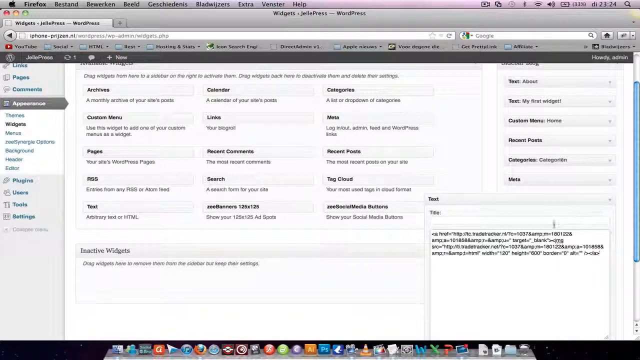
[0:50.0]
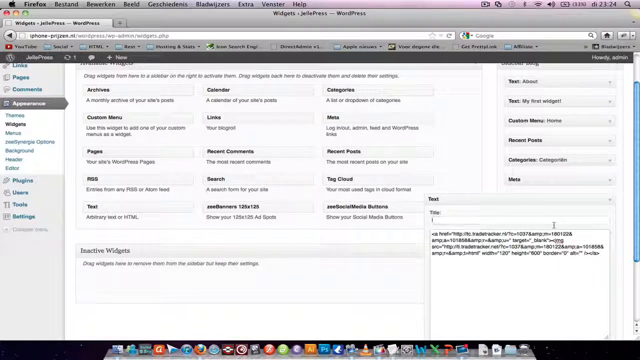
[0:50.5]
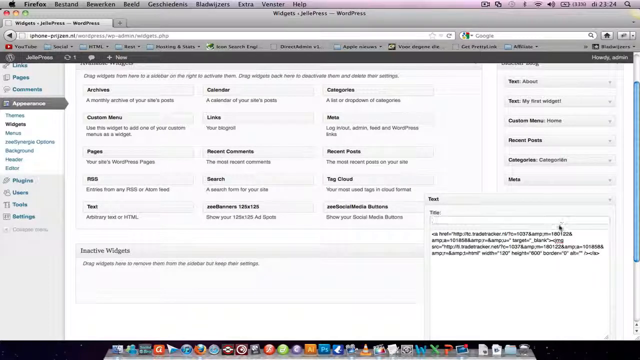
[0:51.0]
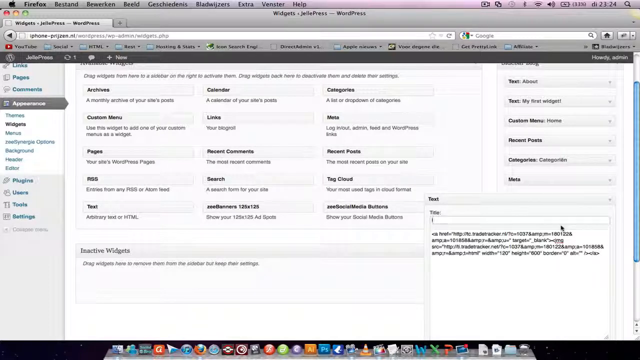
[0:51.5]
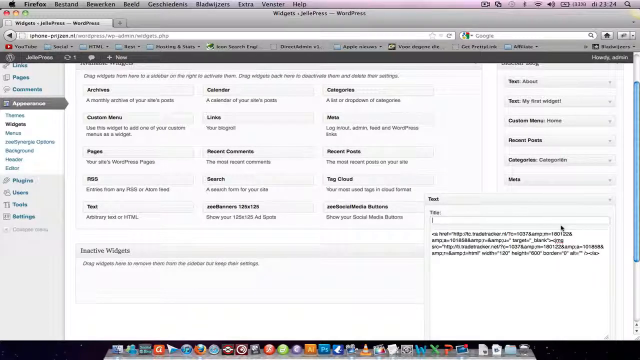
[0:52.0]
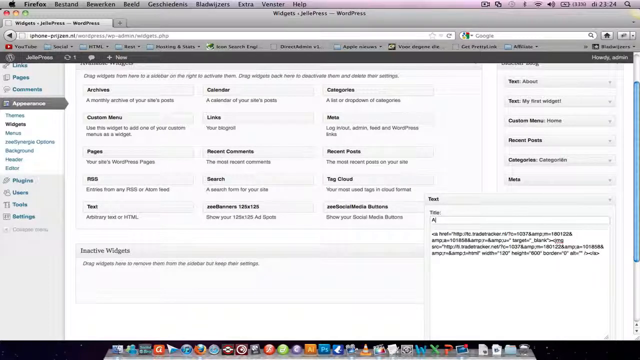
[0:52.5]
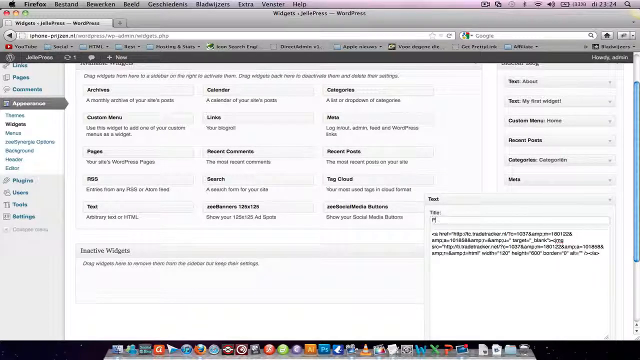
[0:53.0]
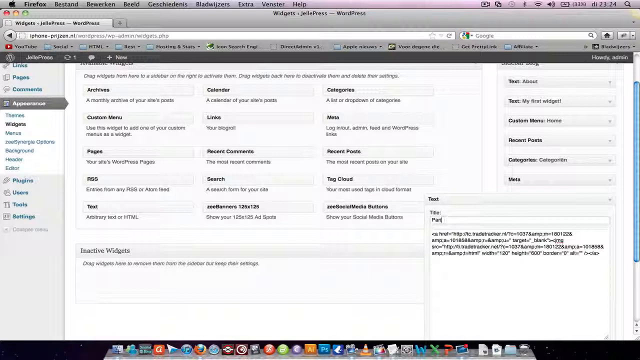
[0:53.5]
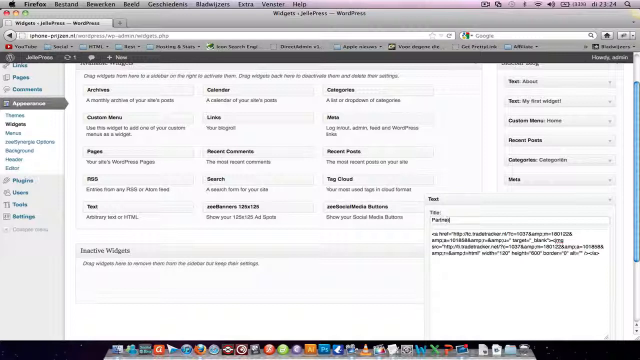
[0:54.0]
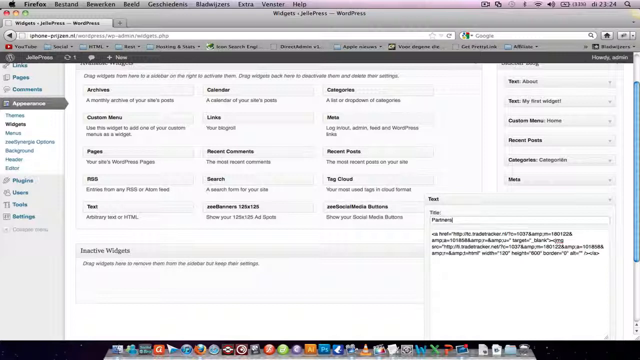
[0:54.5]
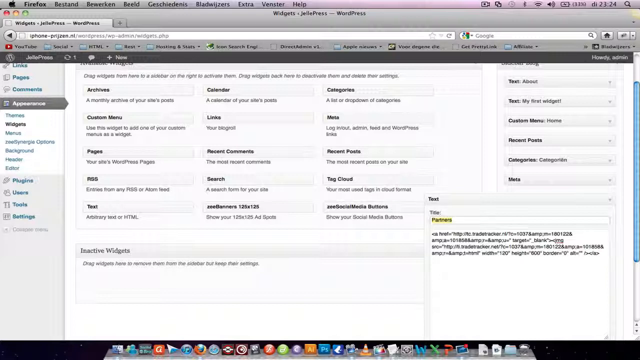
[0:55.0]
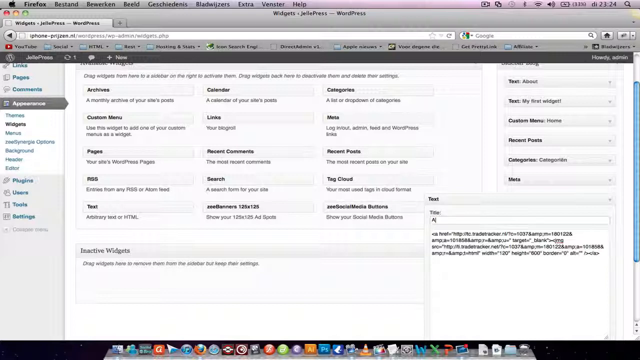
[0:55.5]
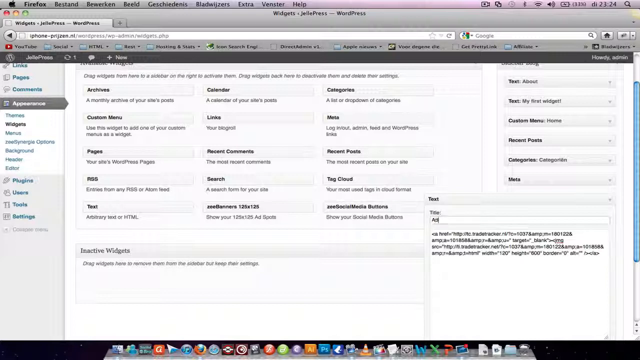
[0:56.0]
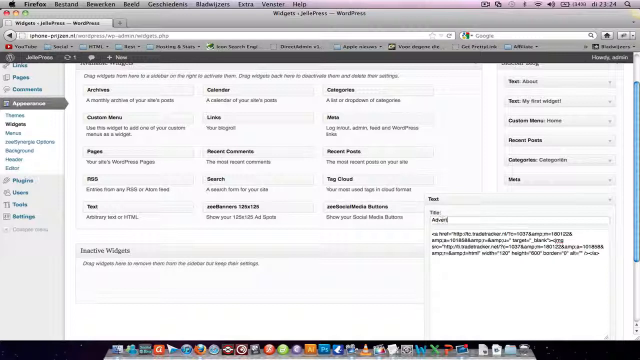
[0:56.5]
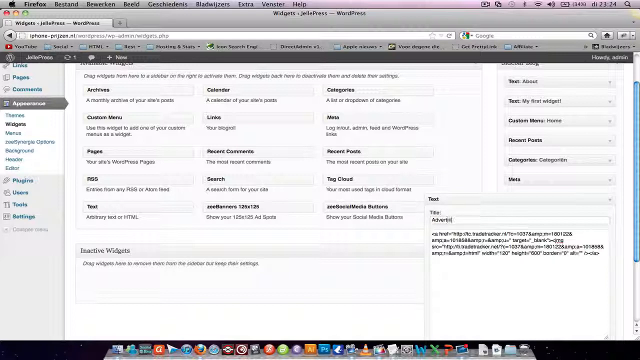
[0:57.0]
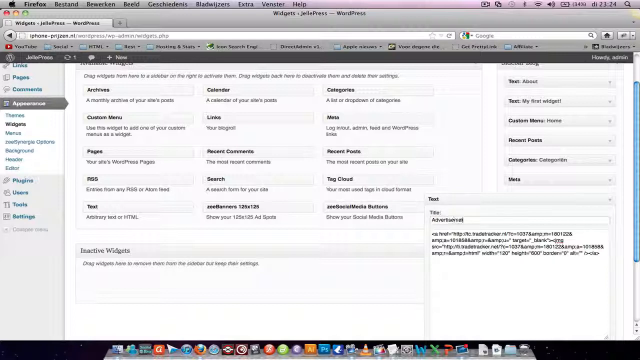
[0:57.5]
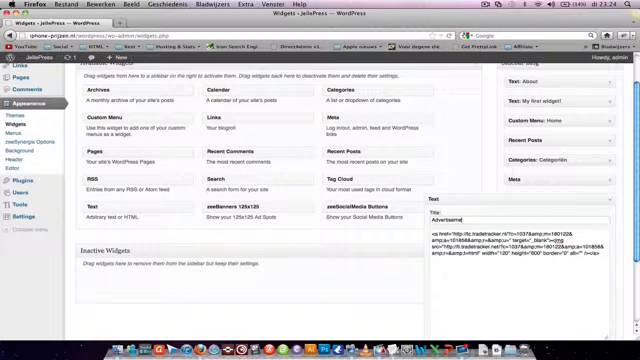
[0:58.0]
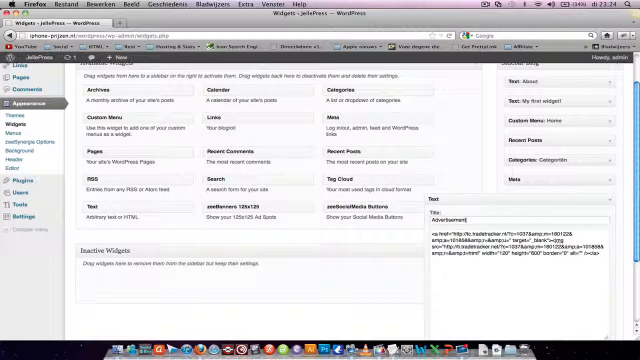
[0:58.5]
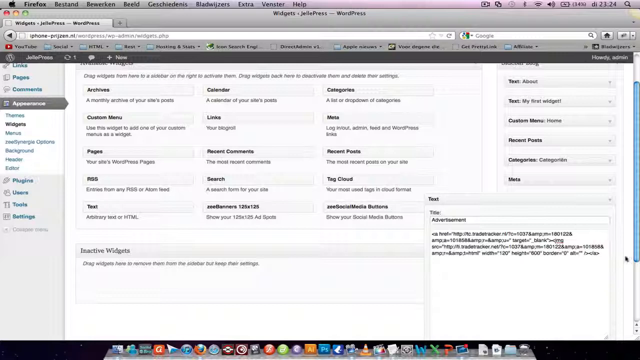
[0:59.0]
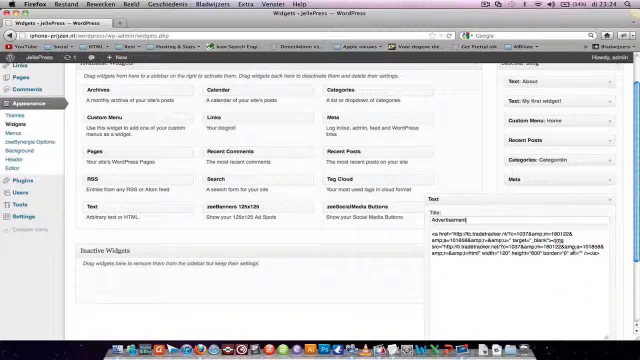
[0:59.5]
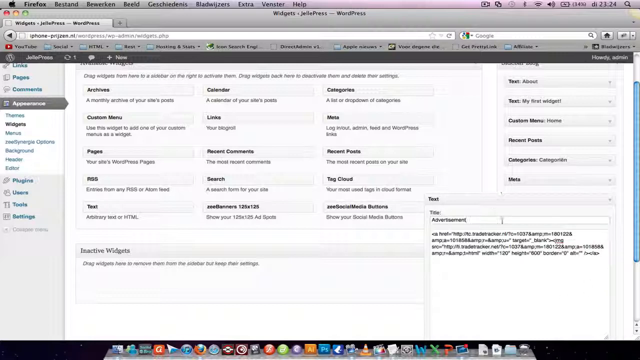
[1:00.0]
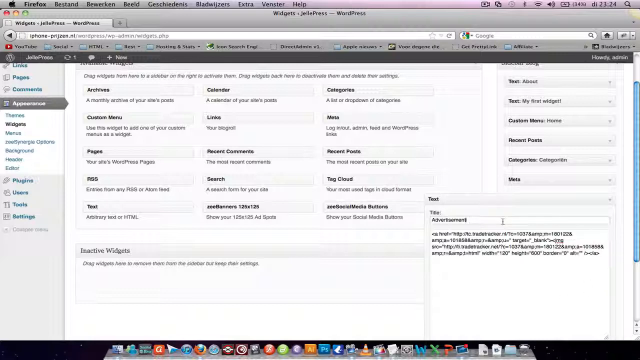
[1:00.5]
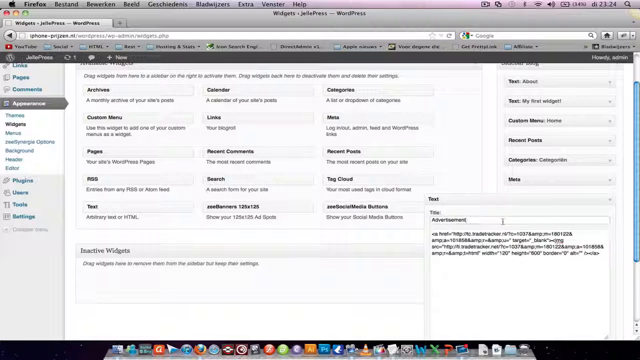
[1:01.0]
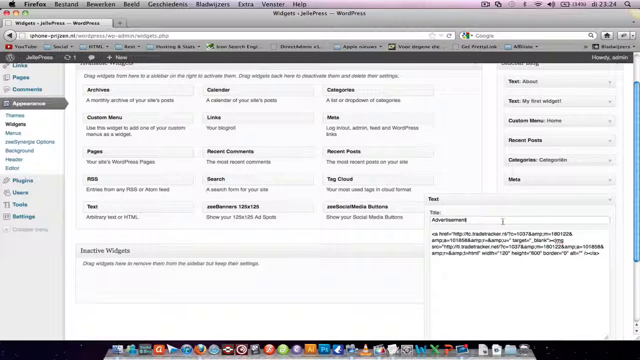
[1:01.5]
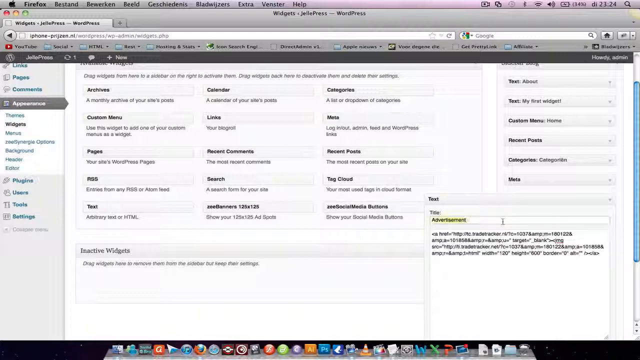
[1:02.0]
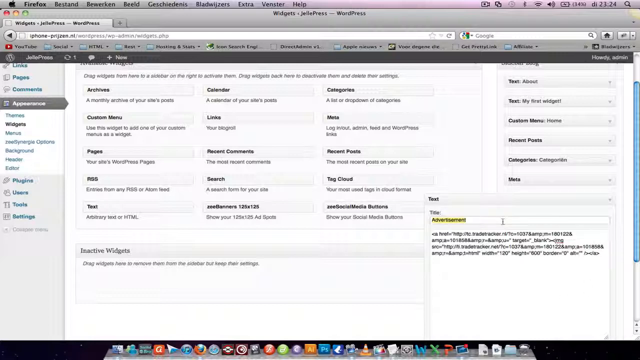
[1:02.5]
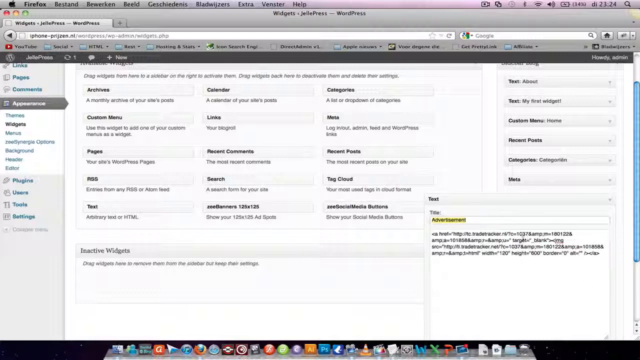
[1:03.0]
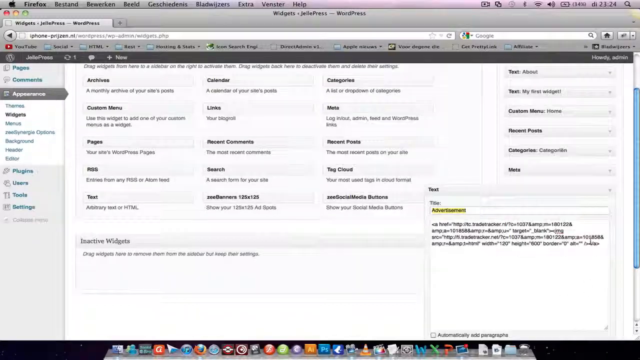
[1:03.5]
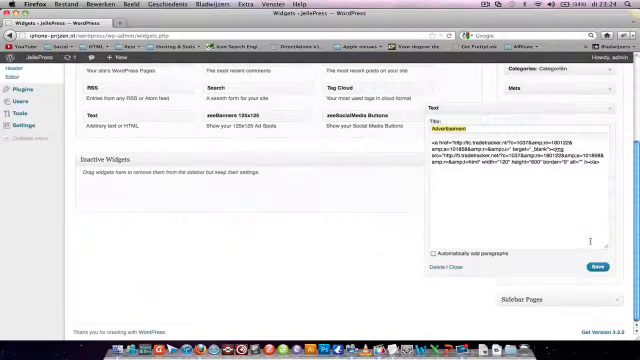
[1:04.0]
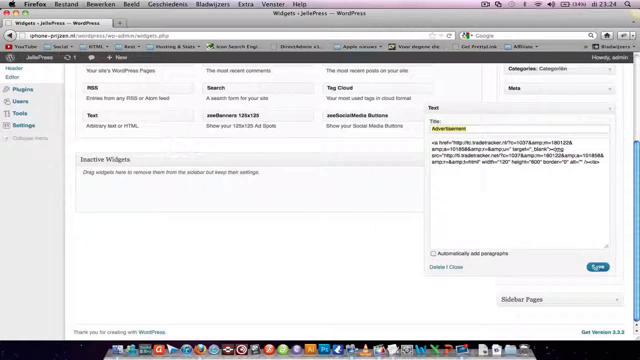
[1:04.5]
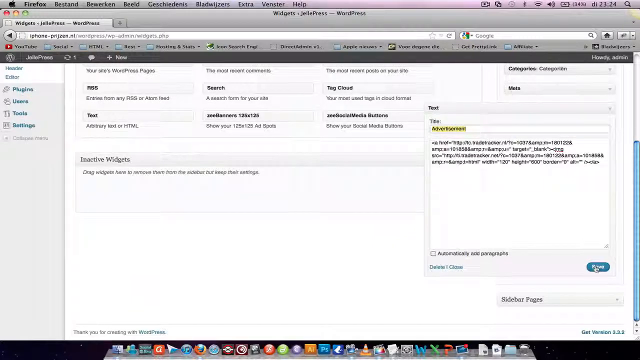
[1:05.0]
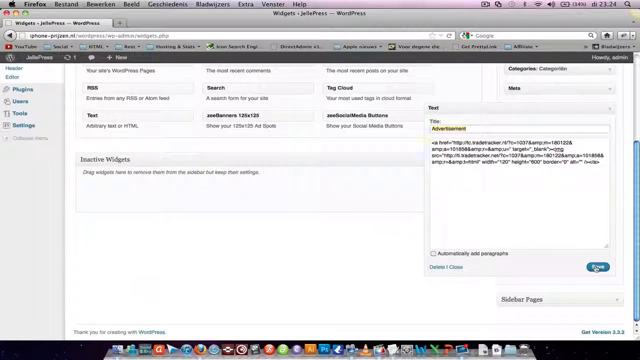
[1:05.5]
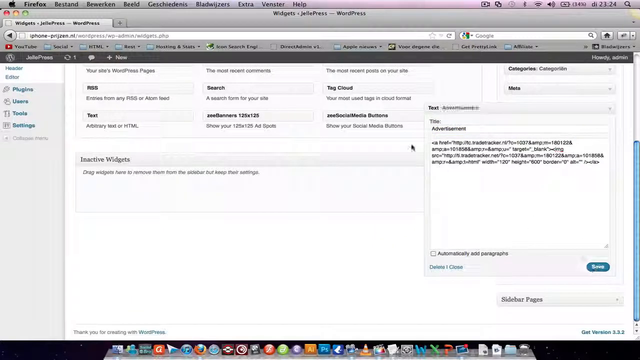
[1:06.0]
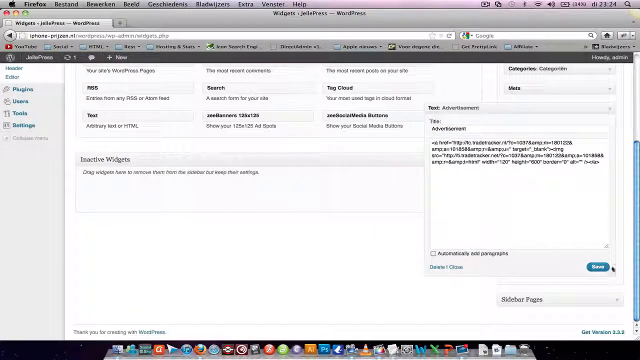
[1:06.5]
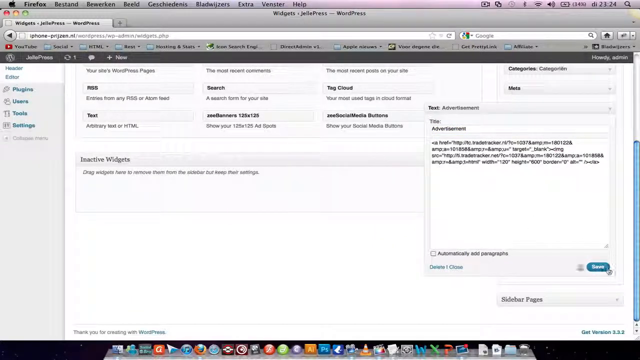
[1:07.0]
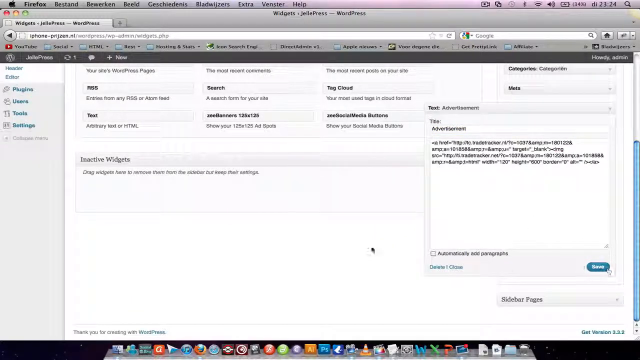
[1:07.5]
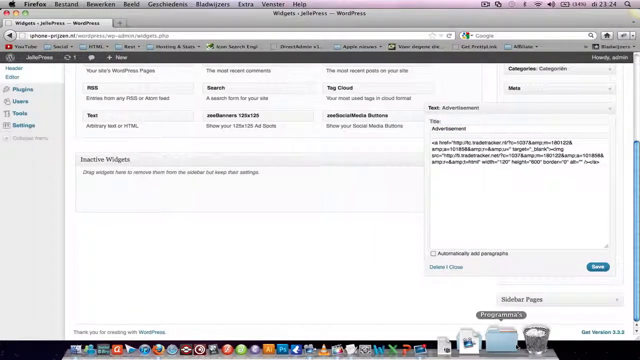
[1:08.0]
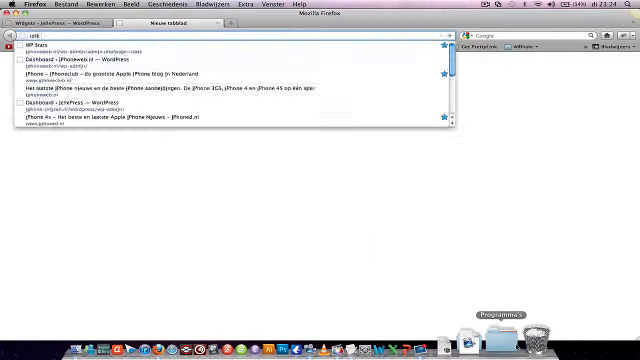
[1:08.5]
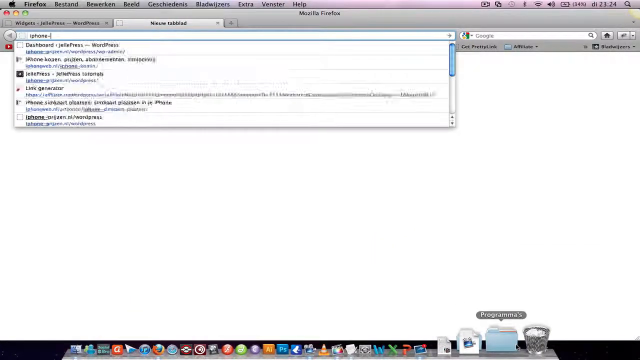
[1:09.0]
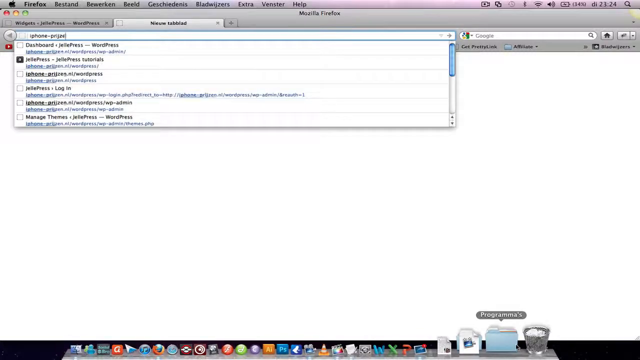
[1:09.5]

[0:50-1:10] On Sidebar Blog, under the heading "text", the widget has opened into text boxes: one for the title and another text box below it. Several pasted words relating to coding are in the box. The title is entered as "partners", which is highlighted in yellow, then backspaced and replaced with "advertisement", and saved. The person opens a new tab and then closes right out of it. The tab reads new tab in a foreign language, and the suggestions under the web address include WP Stats, Dashboard, iPhoneWeb.nl, WordPress, iPhone-iPhoneClub, Dashboard, JellePress, iPhone4, and other words in a foreign language. The browser is Mozilla Firefox.